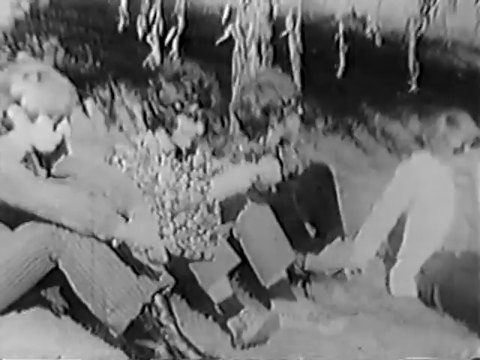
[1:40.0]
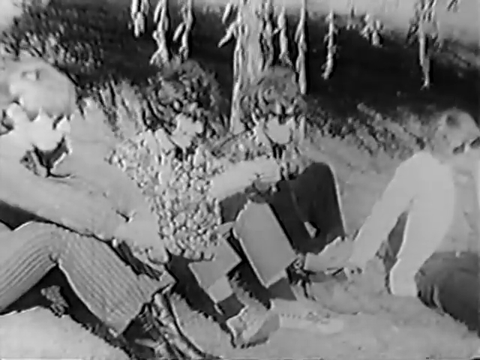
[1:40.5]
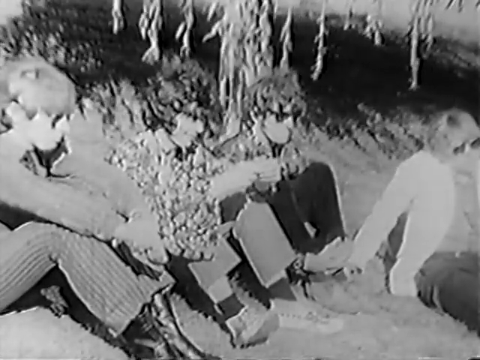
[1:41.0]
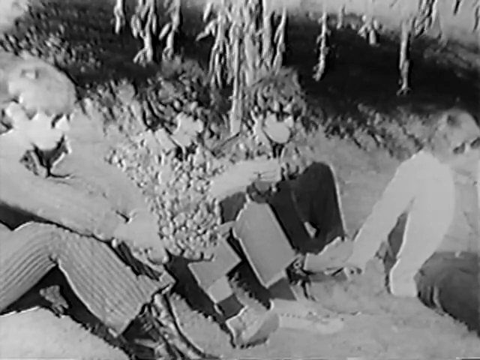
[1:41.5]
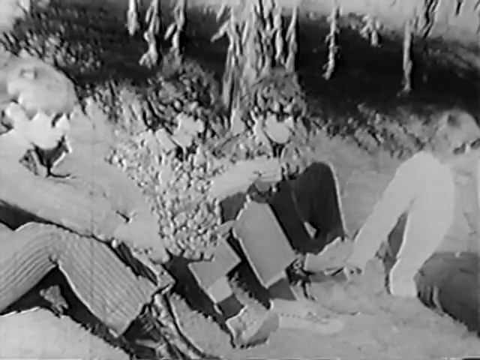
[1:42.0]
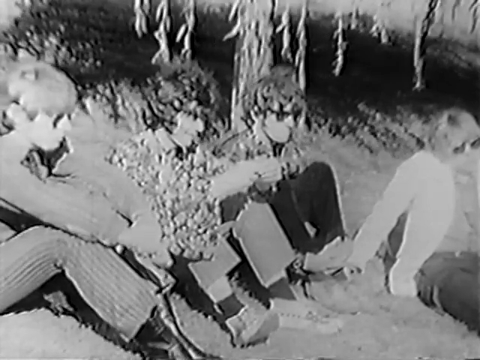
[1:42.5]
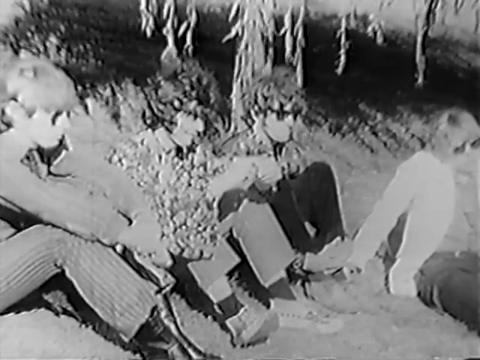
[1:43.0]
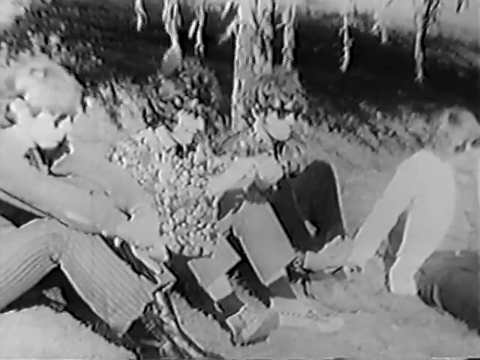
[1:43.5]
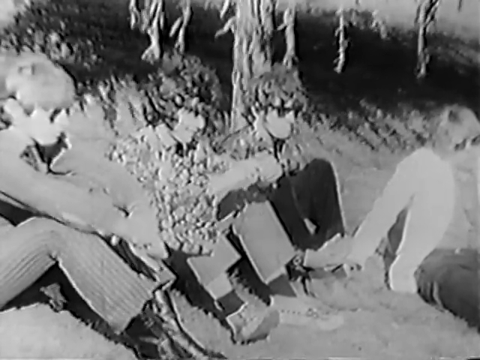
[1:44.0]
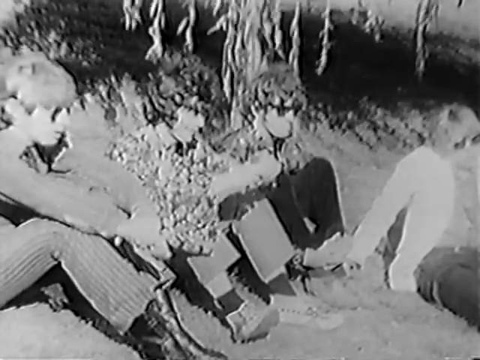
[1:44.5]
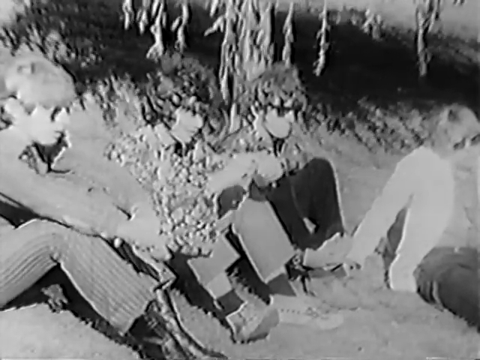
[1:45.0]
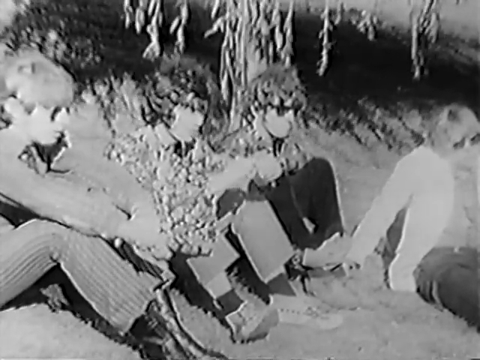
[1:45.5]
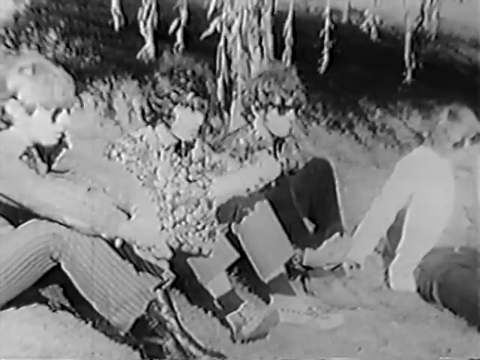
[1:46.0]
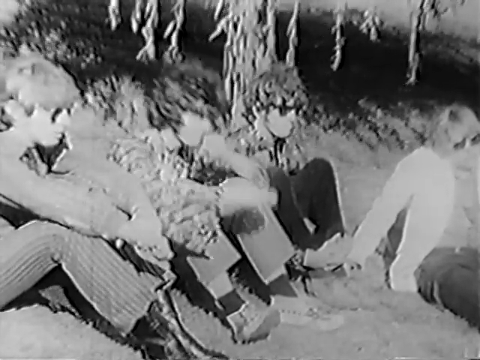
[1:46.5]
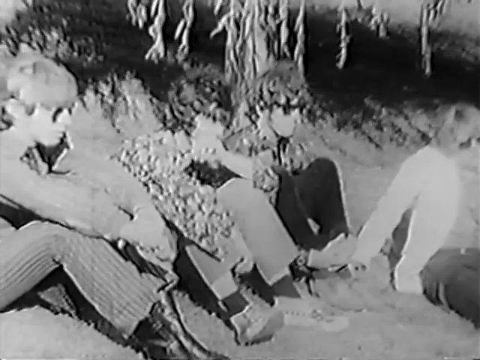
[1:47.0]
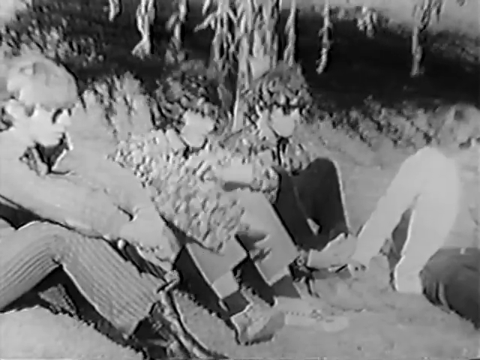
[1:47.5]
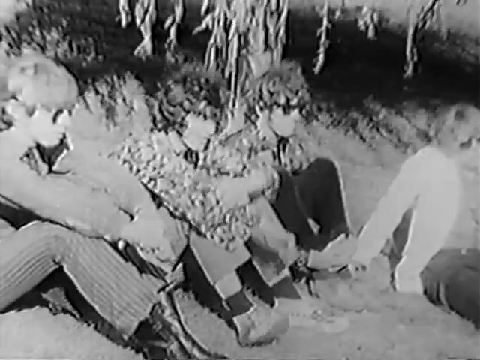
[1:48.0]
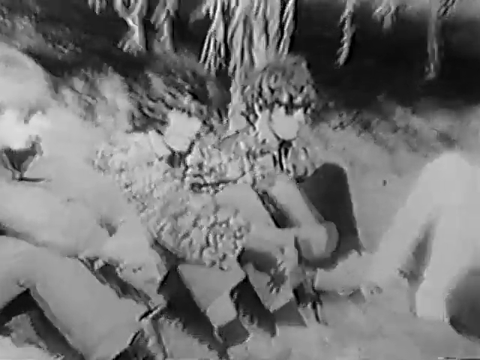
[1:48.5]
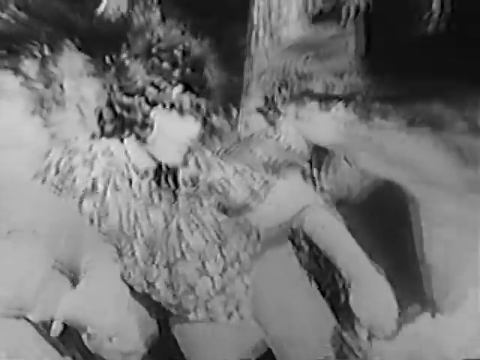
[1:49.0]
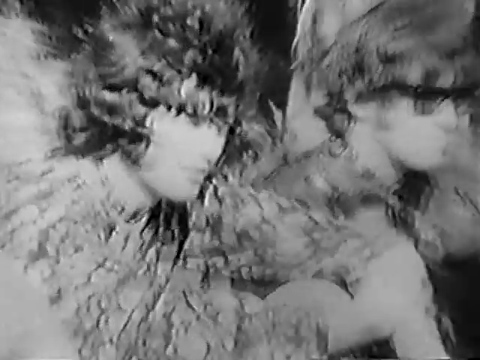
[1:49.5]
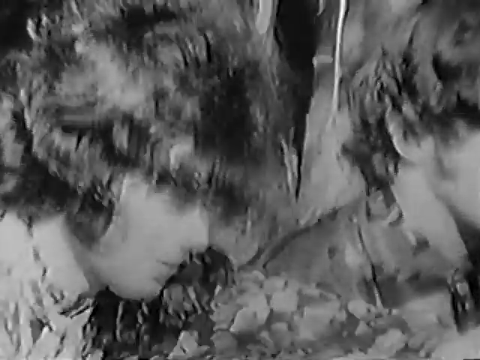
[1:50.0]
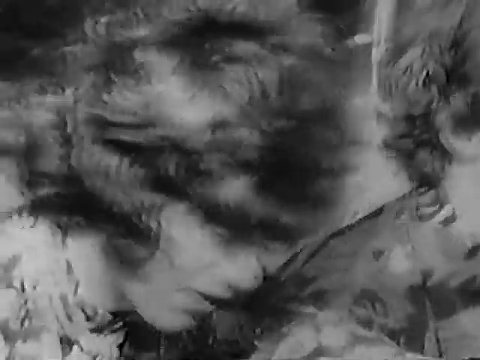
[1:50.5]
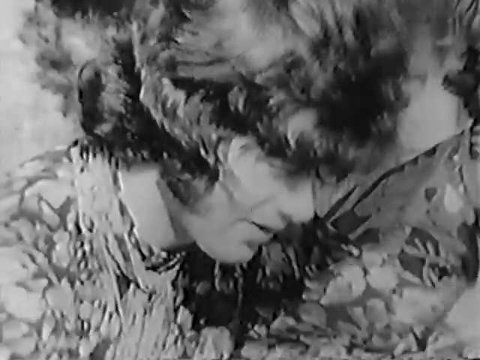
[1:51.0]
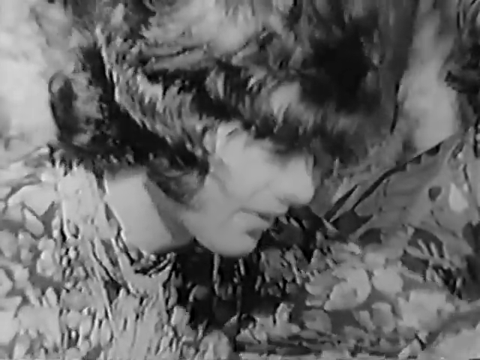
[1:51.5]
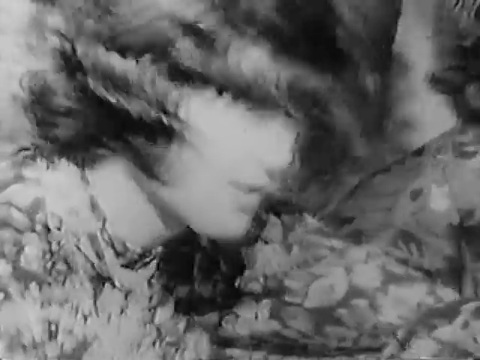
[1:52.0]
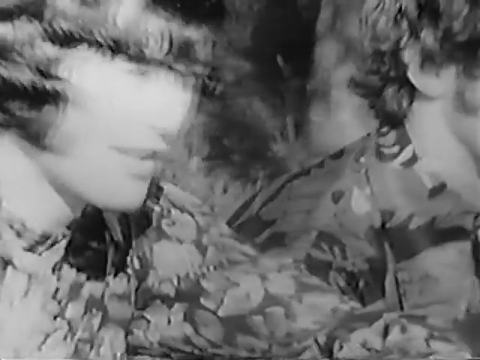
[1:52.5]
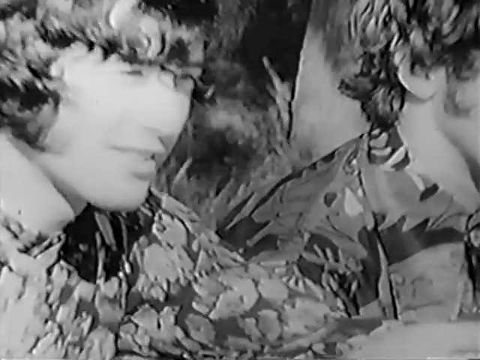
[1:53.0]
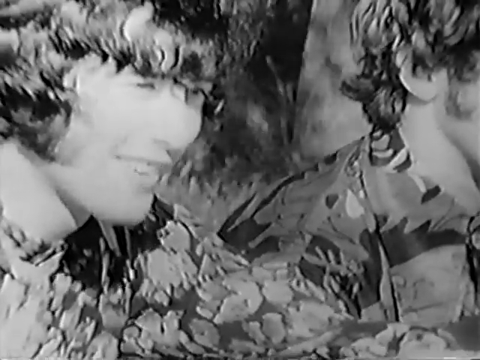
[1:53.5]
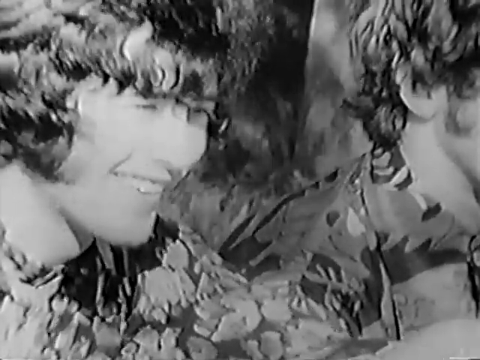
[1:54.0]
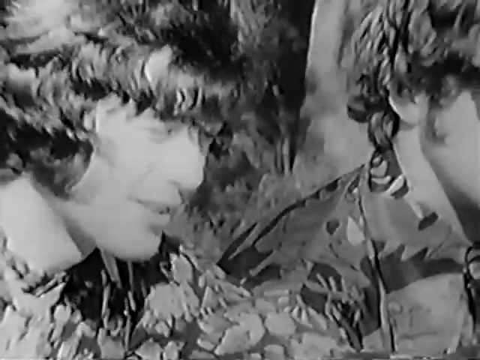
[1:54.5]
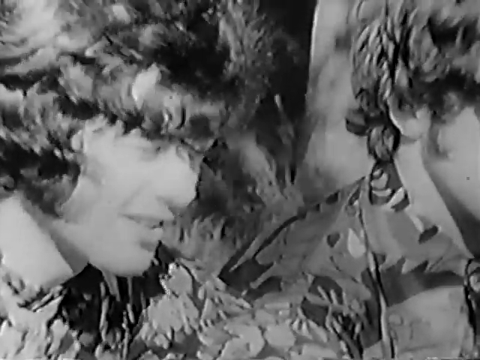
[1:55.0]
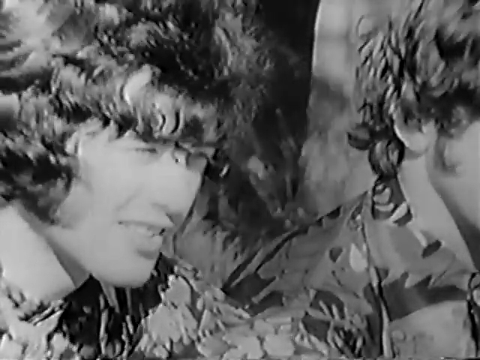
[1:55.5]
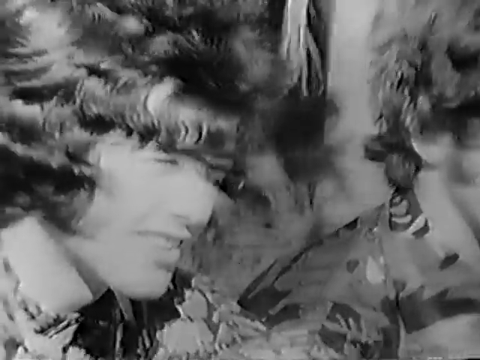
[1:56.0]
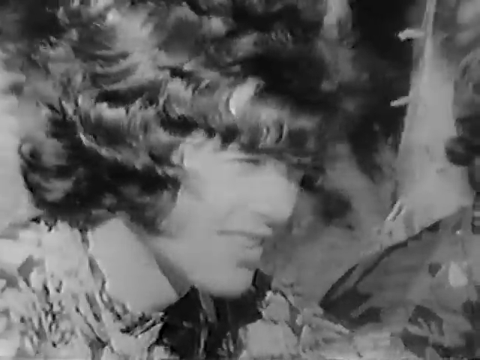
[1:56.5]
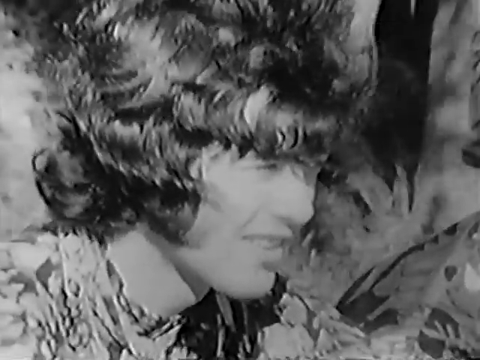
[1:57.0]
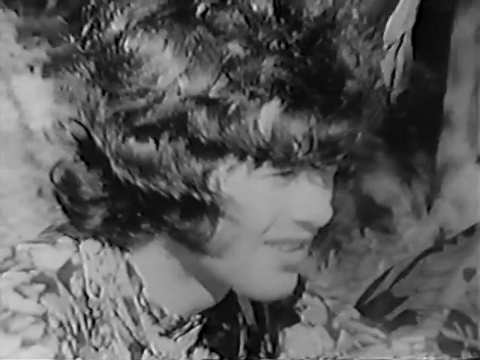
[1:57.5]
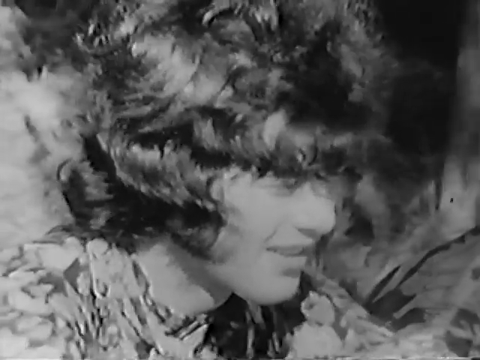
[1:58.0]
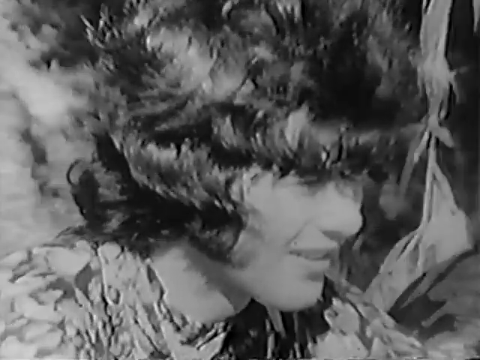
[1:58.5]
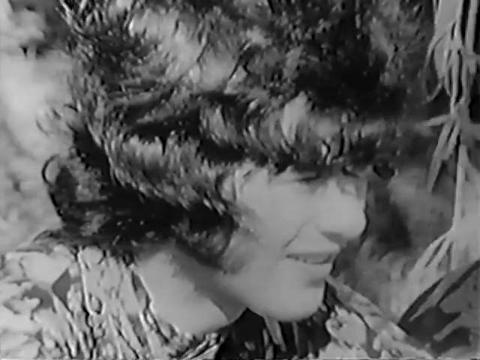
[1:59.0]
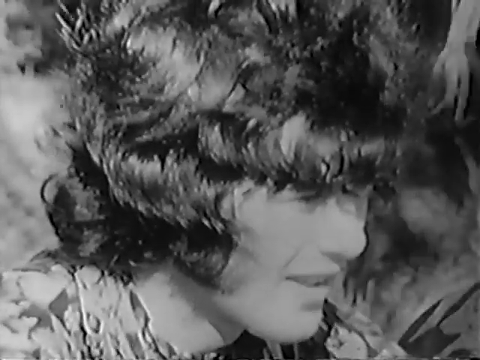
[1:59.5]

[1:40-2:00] The person in the middle of the four continues talking, and the camera moves to a close-up of him. Before the close-up, he moves his hands a bit: he goes from playing with the blade of grass in front of him to putting his right arm down and bending his left arm at the elbow up to his face, then holds his right elbow with his left arm, puts his hands out in front of him hanging down from his knees, and then puts his right hand to his left elbow, fidgeting with his arms. He looks down, and he smiles as he keeps talking. The shot becomes an extreme close-up showing just his head; he has a mop of very curly, very bushy dark hair. The ear of the person sitting to his left is also visible.